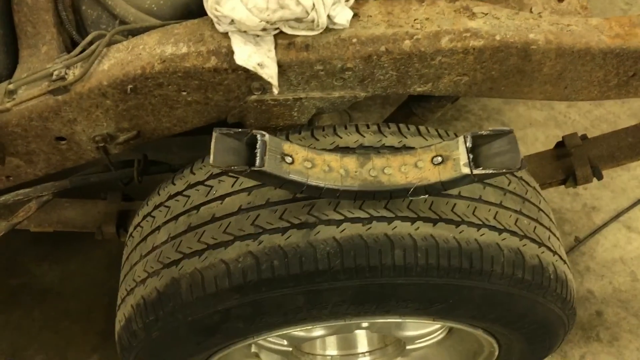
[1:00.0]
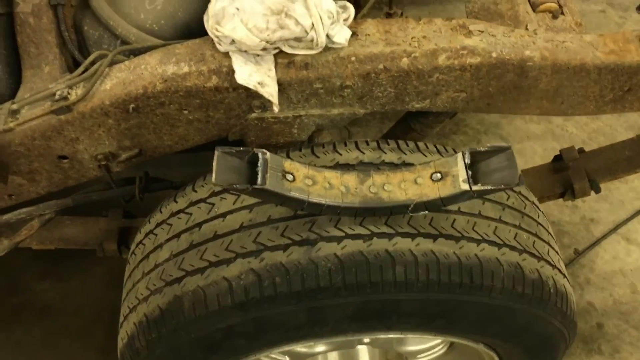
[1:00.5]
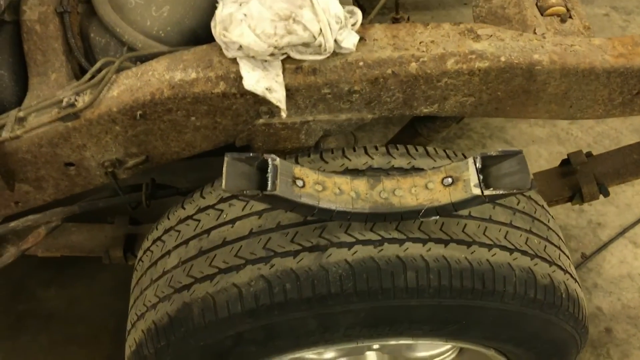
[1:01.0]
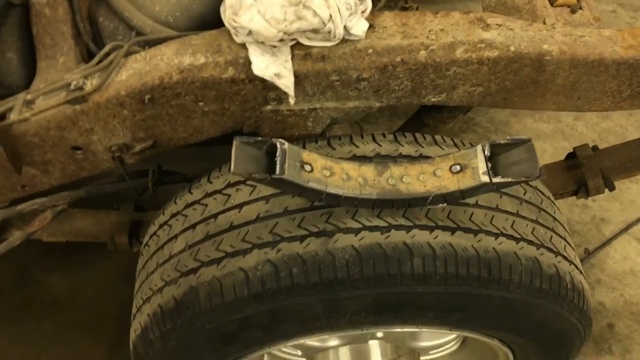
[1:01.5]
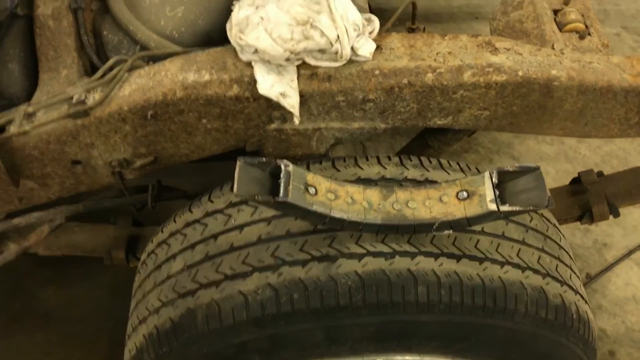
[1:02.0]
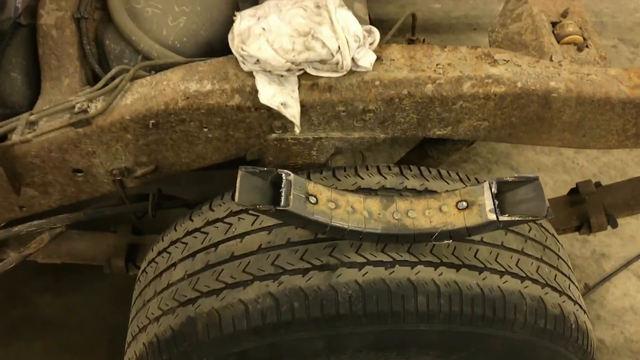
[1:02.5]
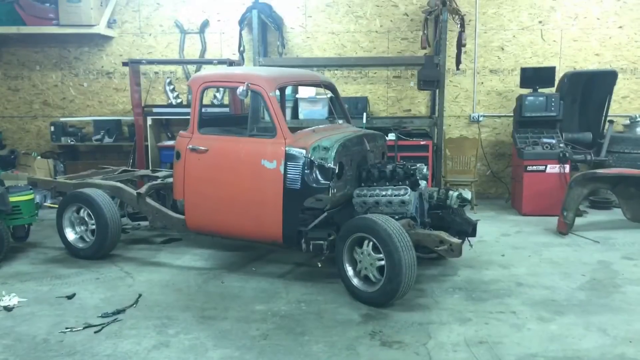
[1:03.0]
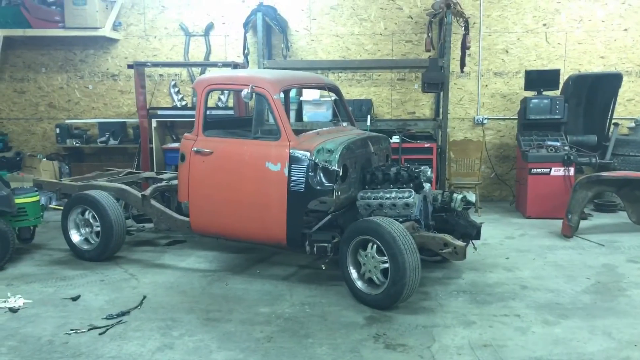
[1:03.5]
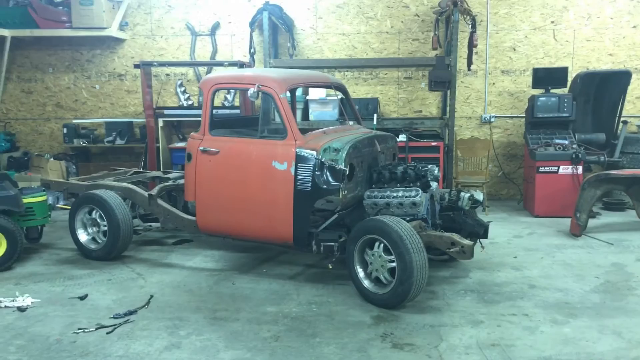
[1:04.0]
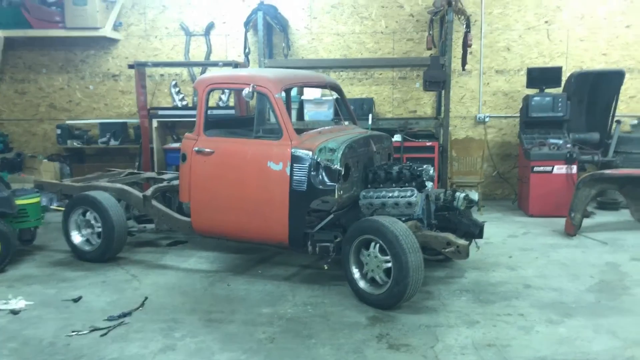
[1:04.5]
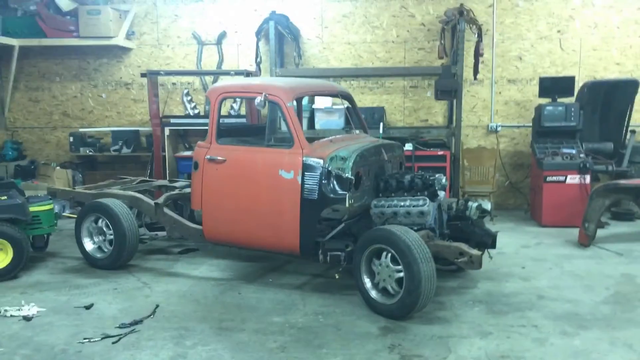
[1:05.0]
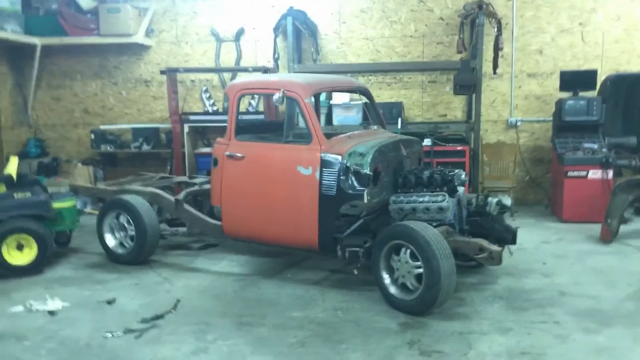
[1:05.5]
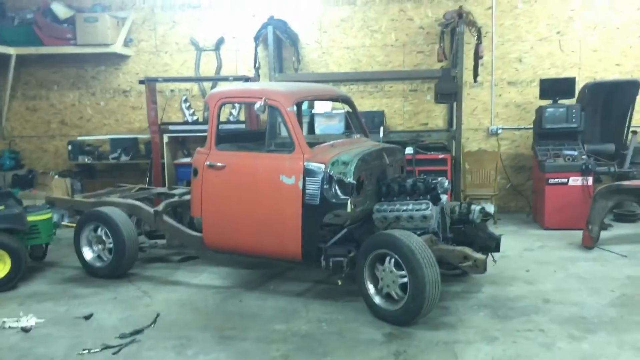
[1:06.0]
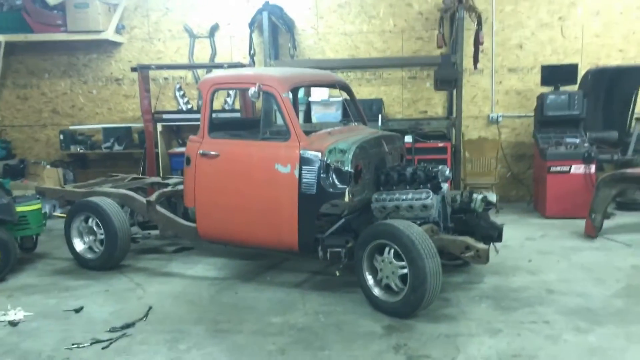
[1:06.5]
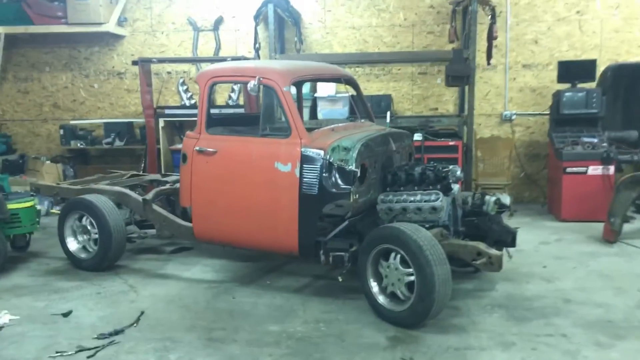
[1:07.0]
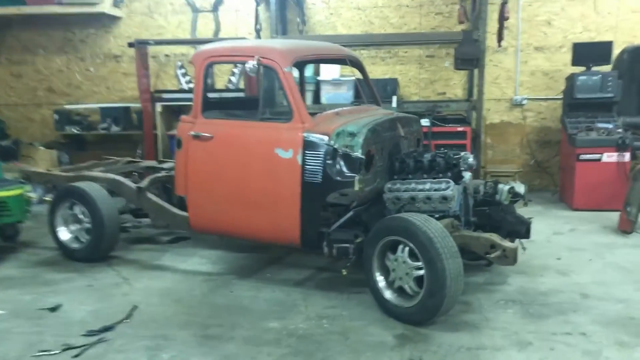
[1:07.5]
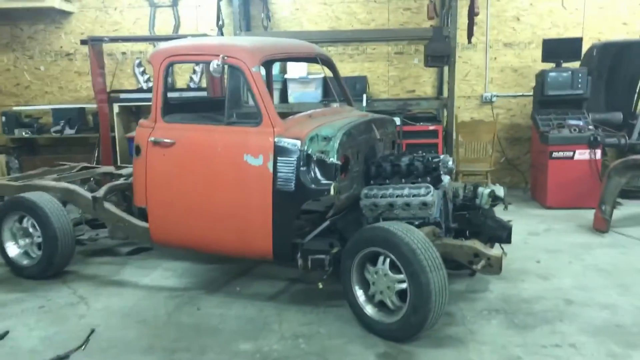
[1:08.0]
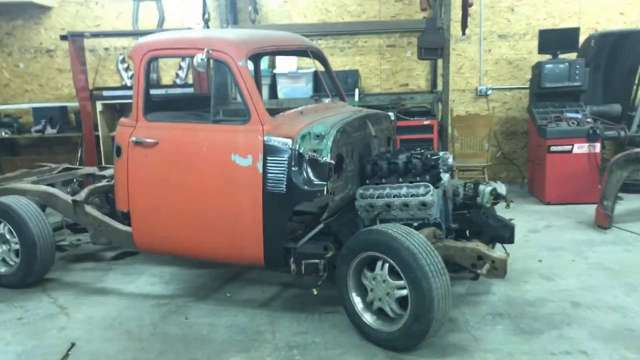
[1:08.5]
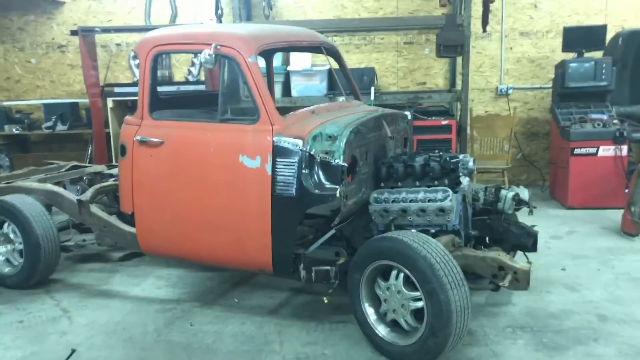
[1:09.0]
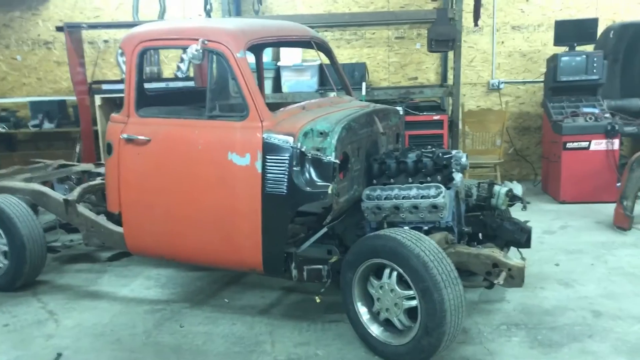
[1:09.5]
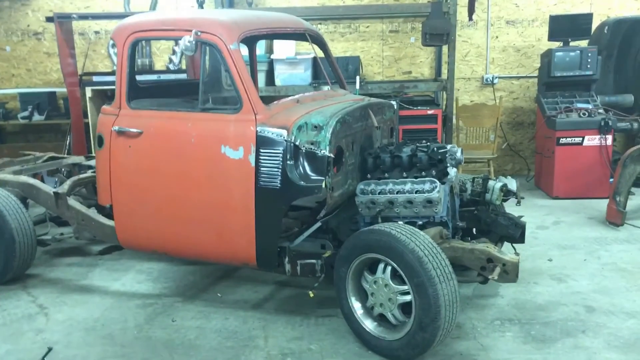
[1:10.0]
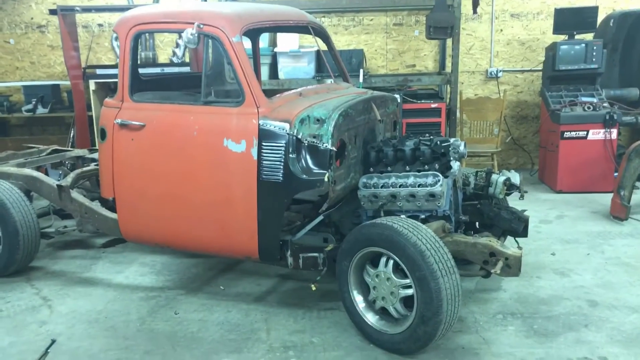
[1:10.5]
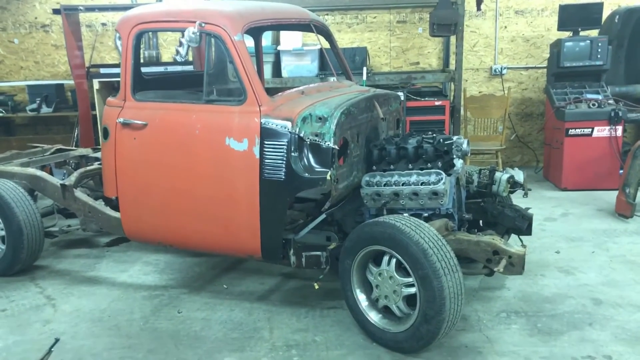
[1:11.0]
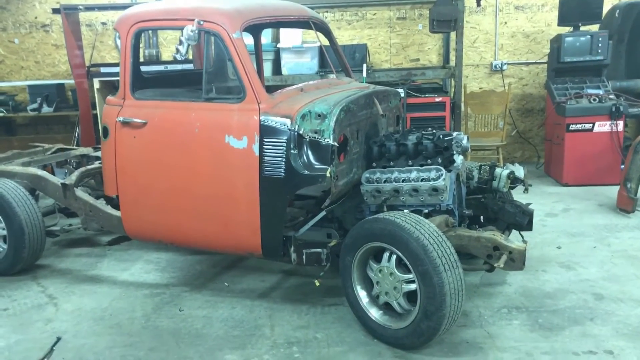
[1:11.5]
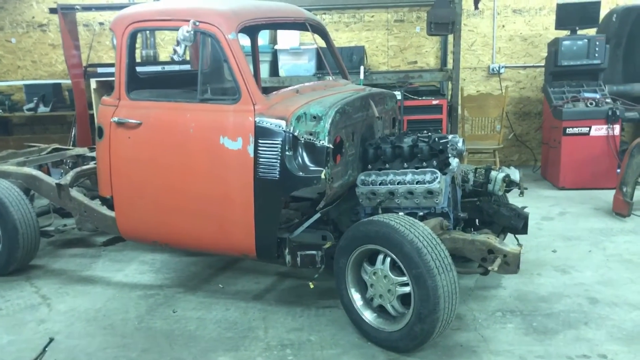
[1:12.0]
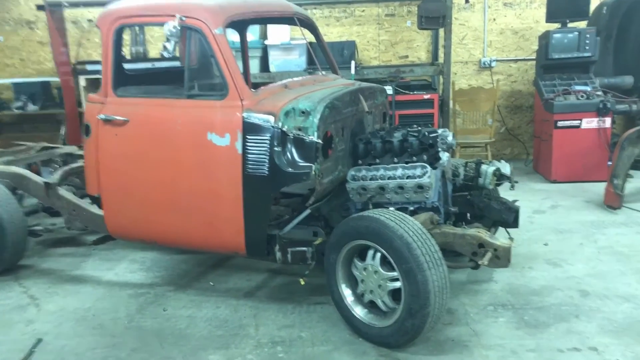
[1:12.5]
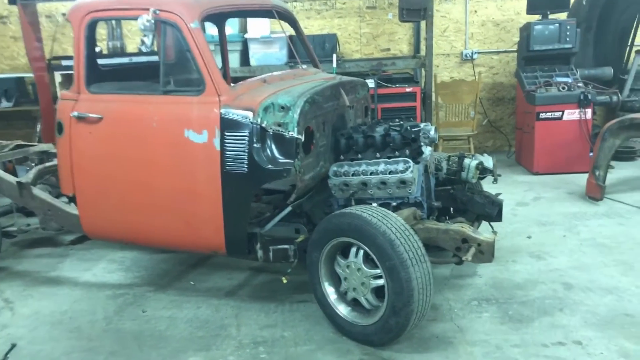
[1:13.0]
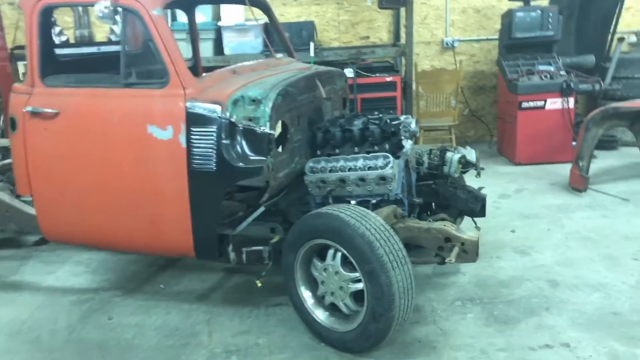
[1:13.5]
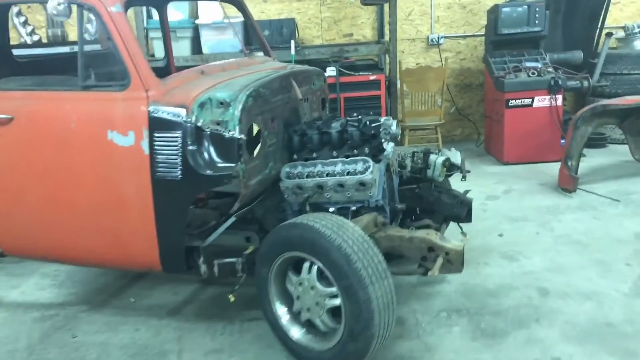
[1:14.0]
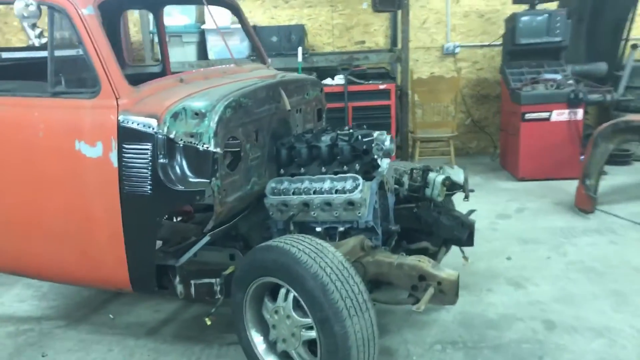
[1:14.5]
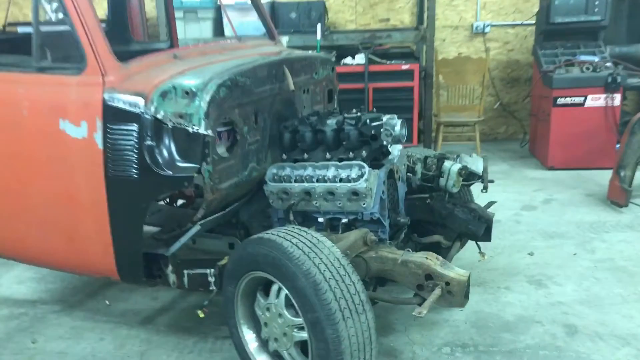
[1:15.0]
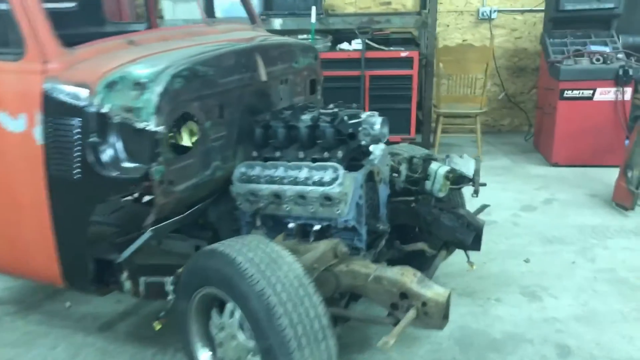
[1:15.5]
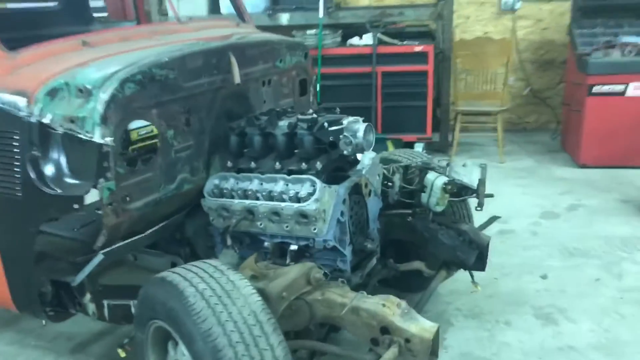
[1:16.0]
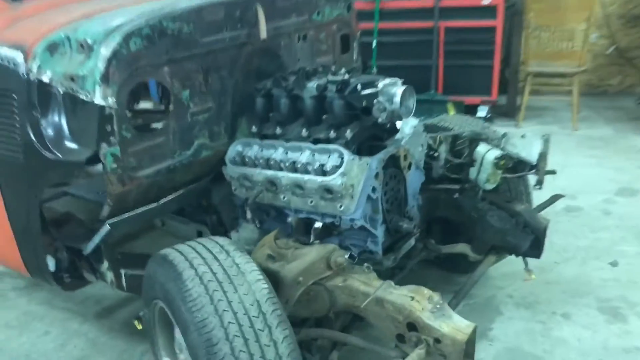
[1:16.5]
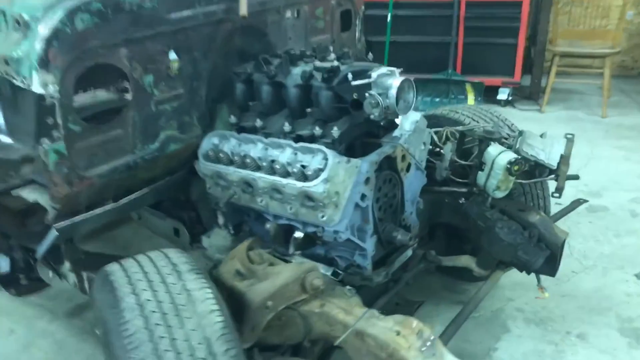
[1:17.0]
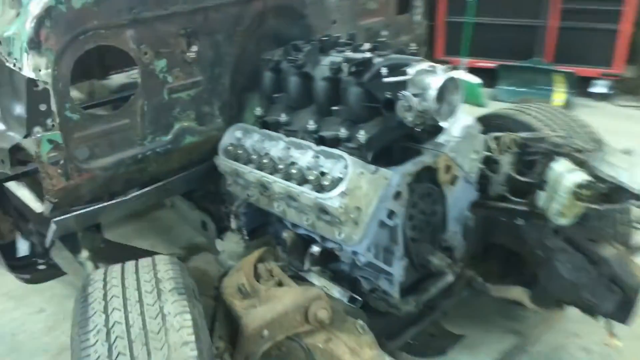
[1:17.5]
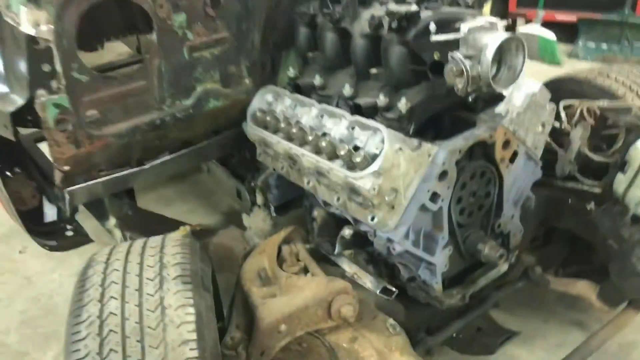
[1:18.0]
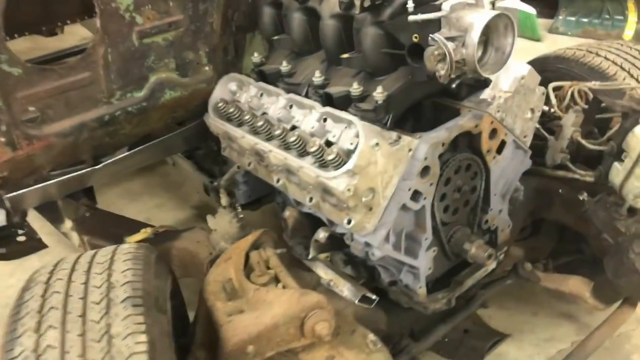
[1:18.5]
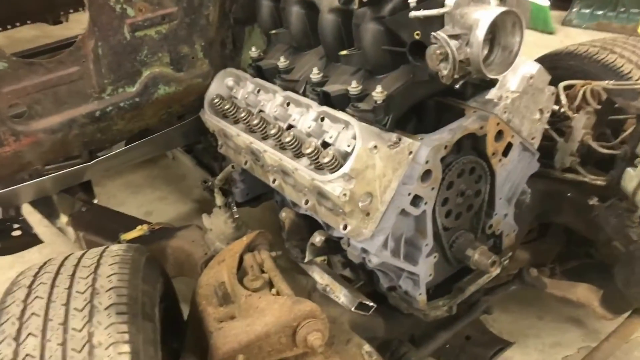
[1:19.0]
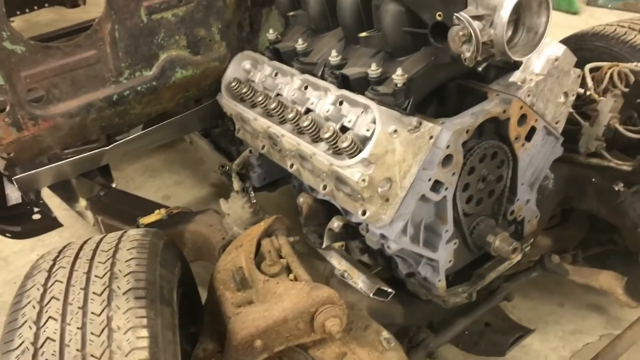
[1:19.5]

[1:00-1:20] The view begins focused on the item on top of the tire. It looks like a handle; it is metal and curved, and the underside of it seems to be visible. It sort of sways back and forth on top of the tire, which looks worn with low tread. The view is apparently of the undercarriage part of a truck bed, which looks kind of corroded and rusted. A dirty, wadded-up old rag is on top of the undercarriage part. The camera stays focused on the handle-like item. When it moves away, the view is further back and shows a vintage truck that used to be orange or red. Most of the truck is missing. The seat area is there, and the door is visible, with a chrome handle and a chrome side-view mirror up on top of the door frame. The windows look to be missing, and the hood is missing. Parts of the engine are apparently still there. The tires are on, and there look to be different hubcaps on each tire. Only the undercarriage is visible in the truck bed area.